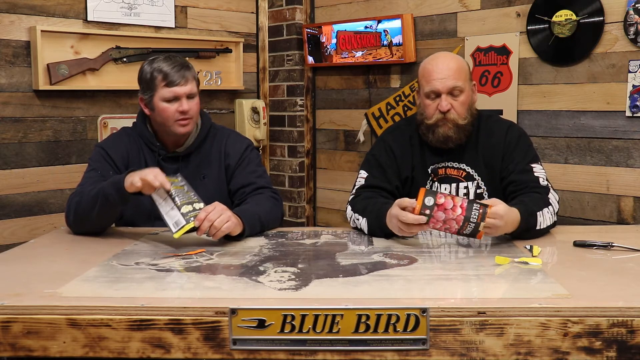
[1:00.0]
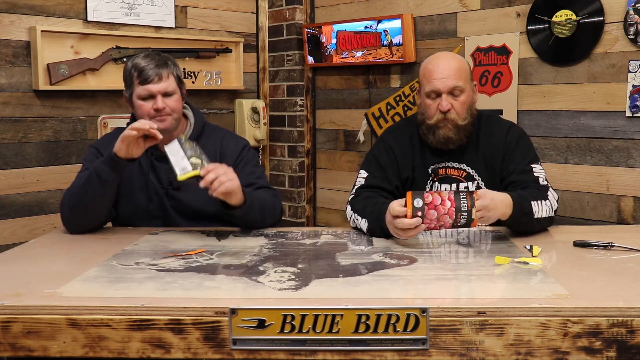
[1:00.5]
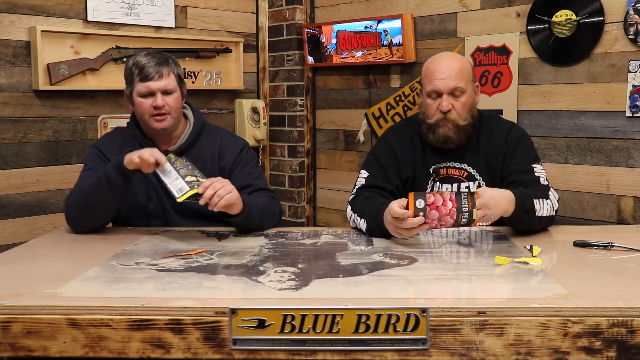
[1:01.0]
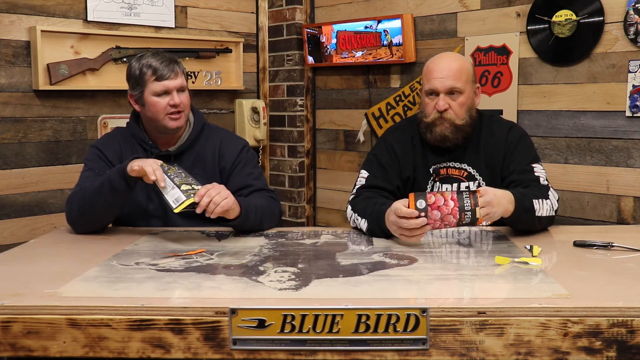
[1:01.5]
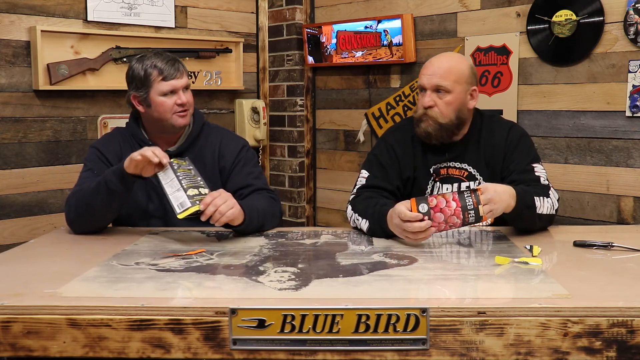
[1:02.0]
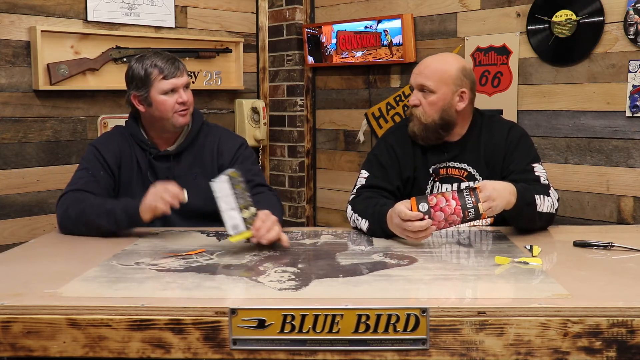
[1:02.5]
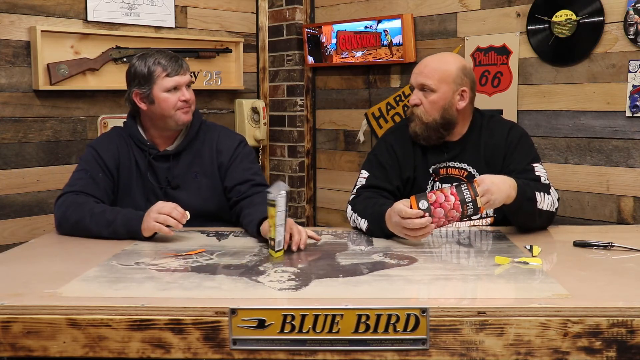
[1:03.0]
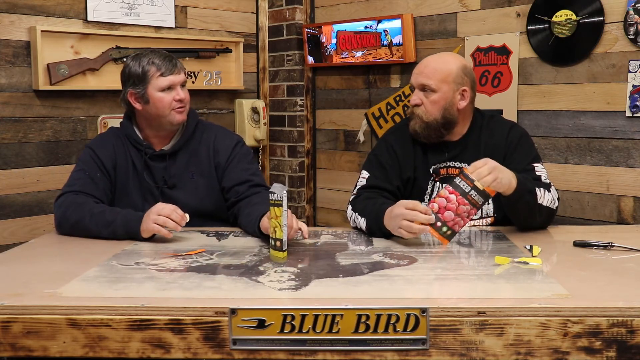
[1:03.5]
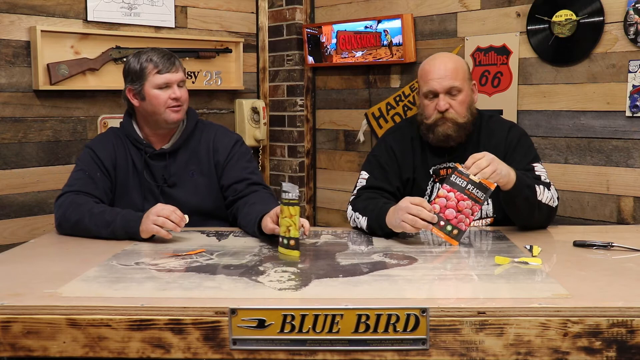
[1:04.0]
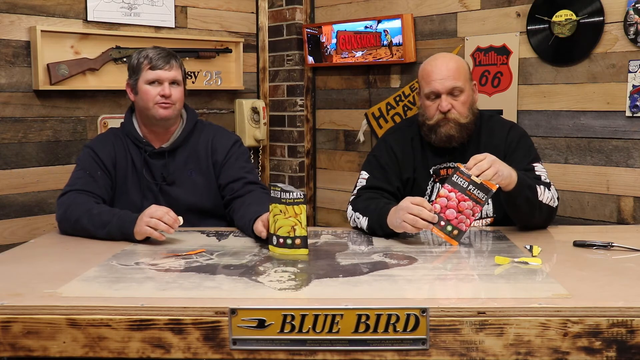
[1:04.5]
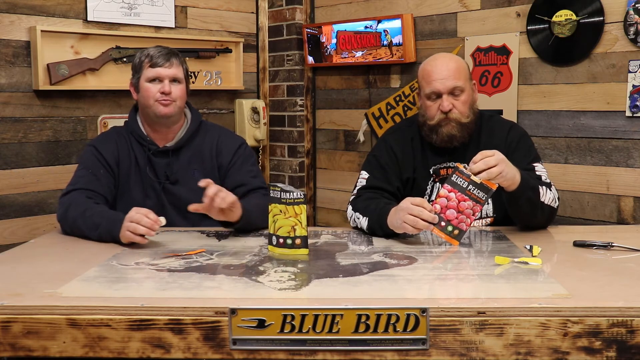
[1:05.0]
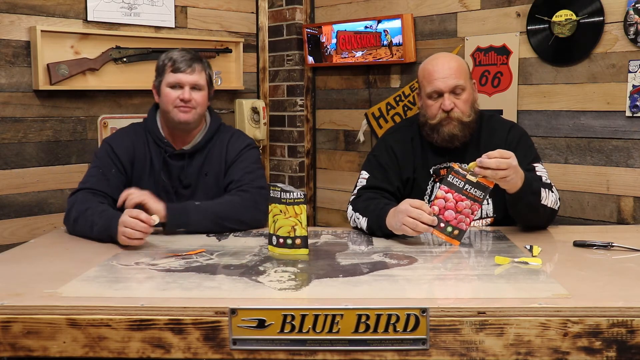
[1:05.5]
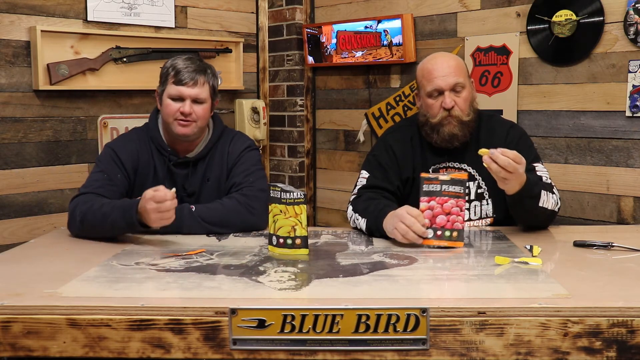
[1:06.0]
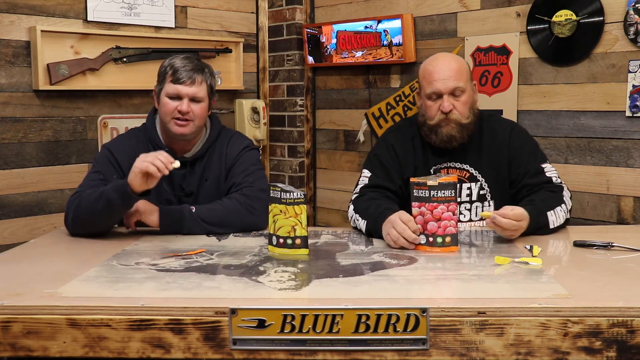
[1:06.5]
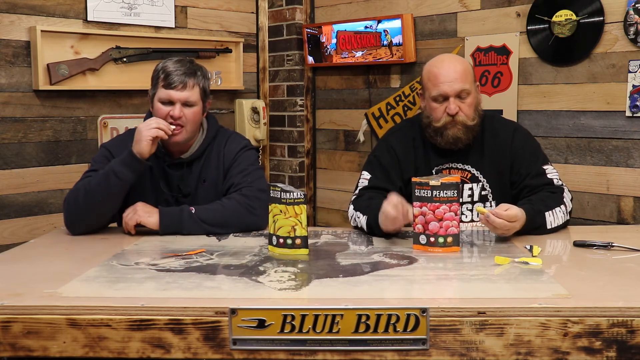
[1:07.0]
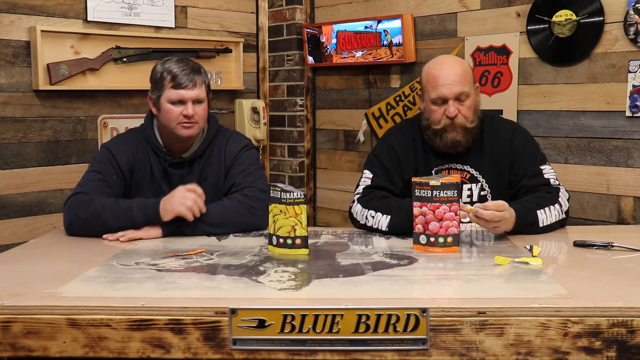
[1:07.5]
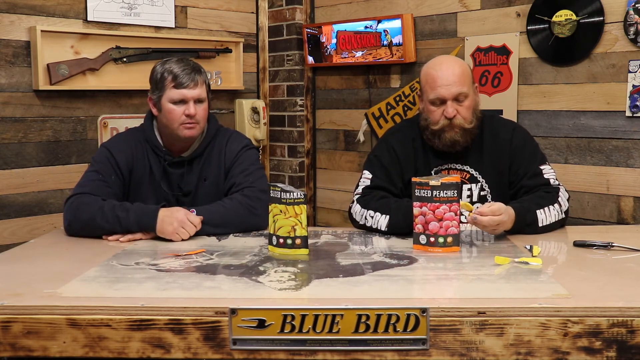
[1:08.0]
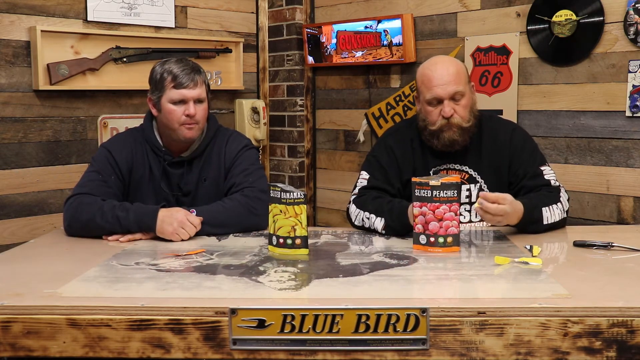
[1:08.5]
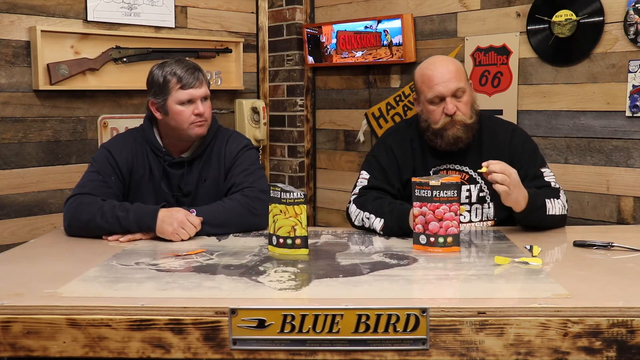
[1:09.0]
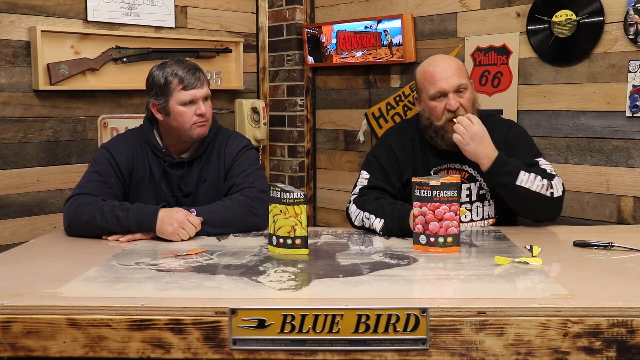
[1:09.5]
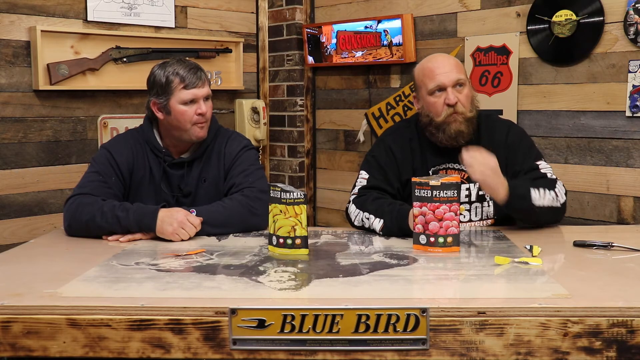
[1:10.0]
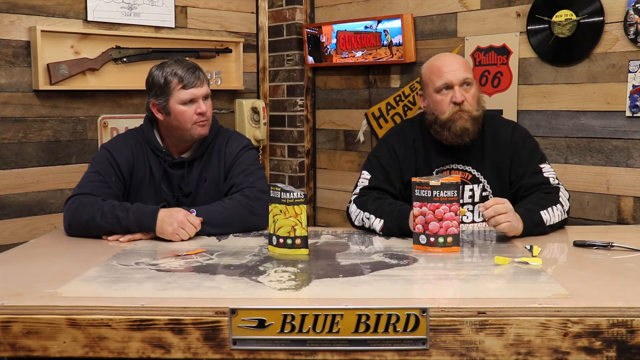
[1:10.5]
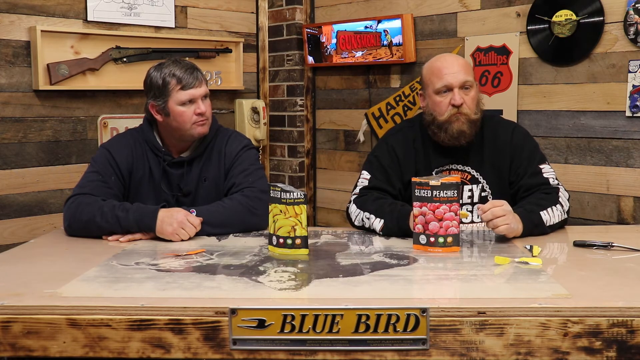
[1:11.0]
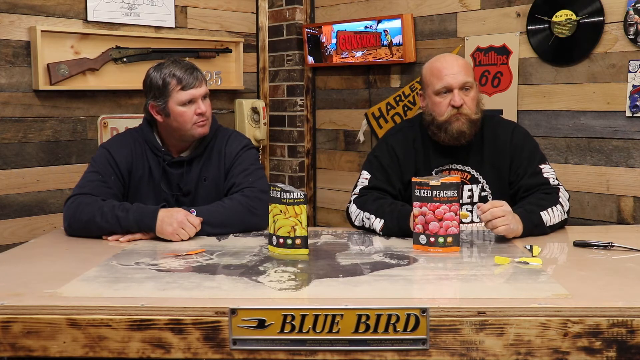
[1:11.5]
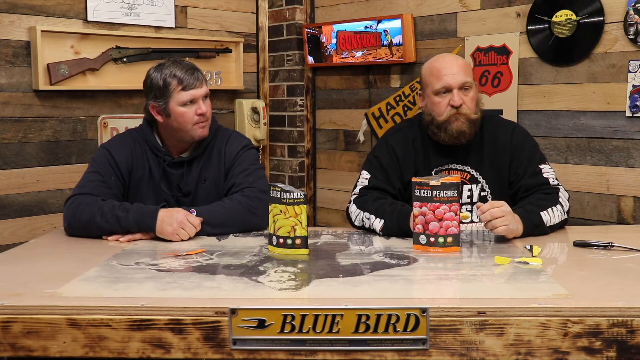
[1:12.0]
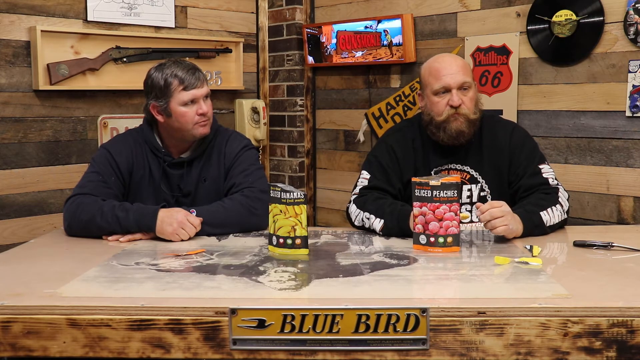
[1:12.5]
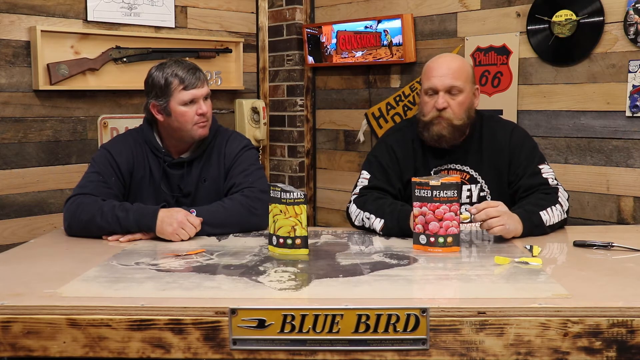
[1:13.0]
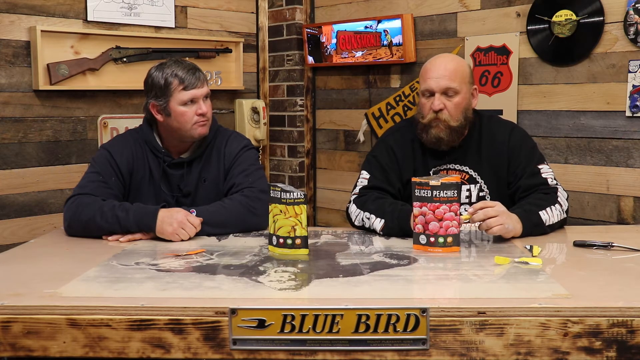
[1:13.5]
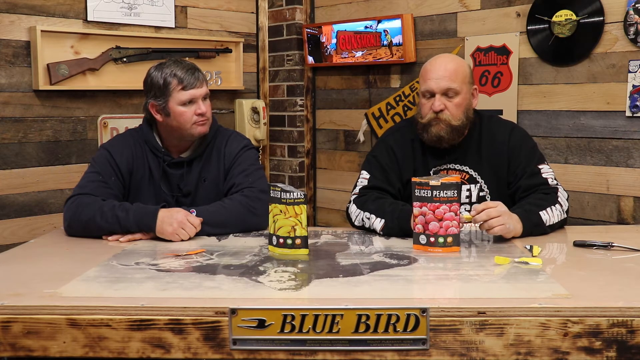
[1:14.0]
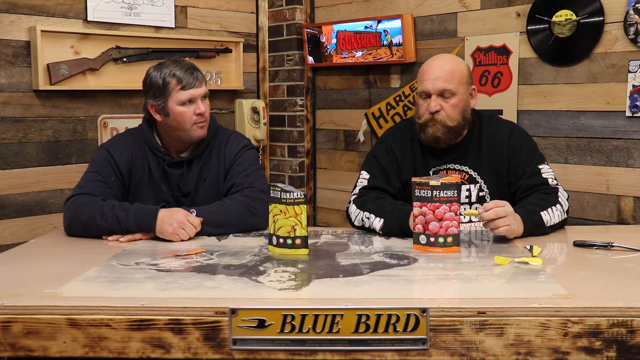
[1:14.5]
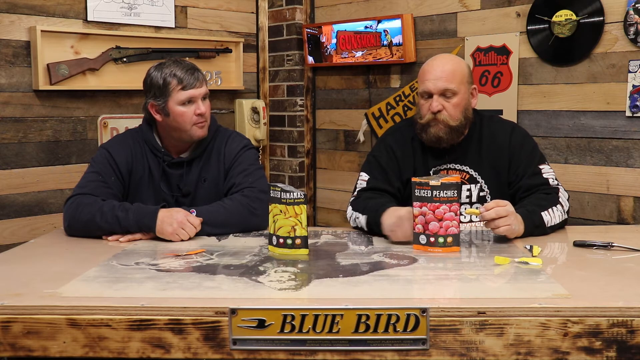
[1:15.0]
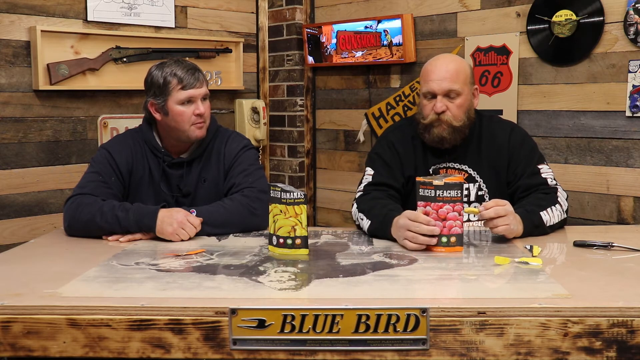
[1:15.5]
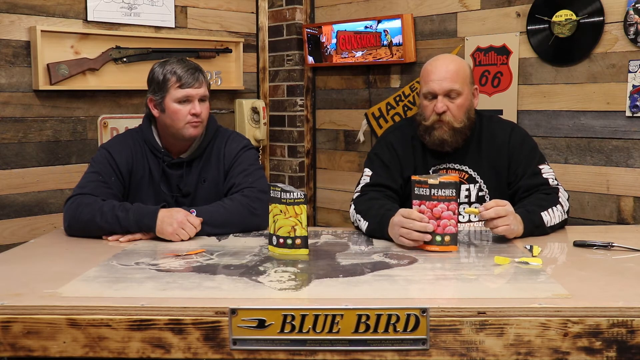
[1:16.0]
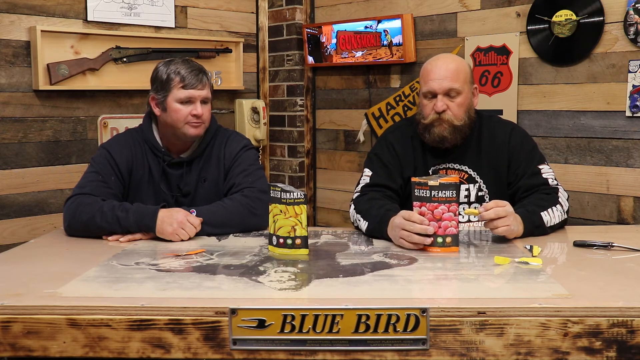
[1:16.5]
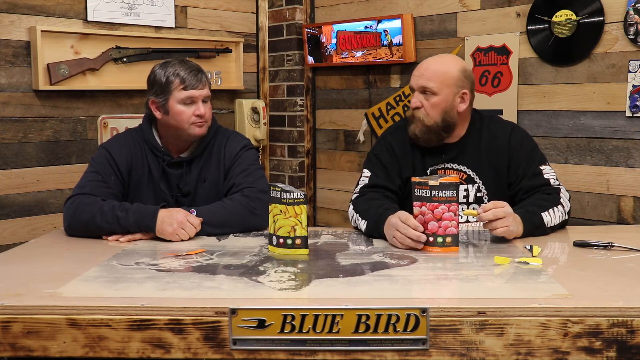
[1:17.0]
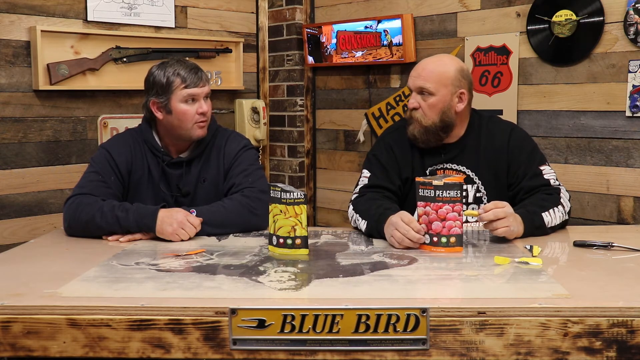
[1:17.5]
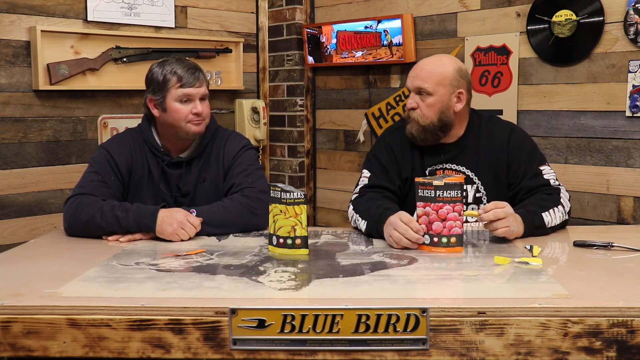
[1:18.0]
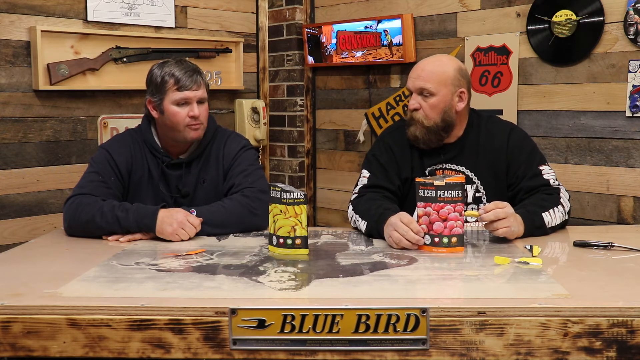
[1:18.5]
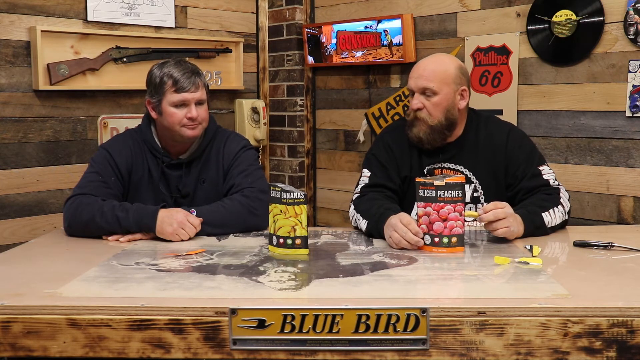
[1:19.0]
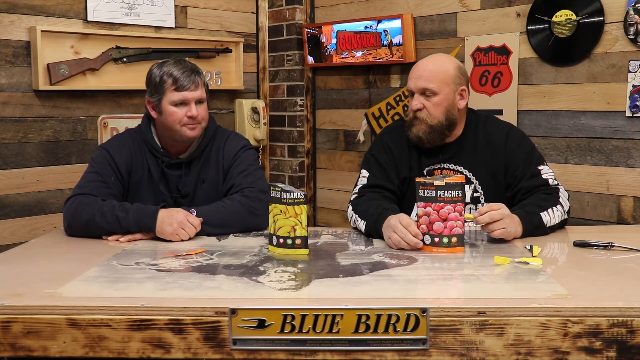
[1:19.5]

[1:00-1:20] The two men in black tops are still eating the snacks from the sachets, with the sticker on the front of the table saying "blue bird". One man's knife is still lying on the table, along with an art picture of an individual on top of the table. In the background there still seems to be a rifle hung on the wall, along with other stickers with numbers and weights written on them, and there also seems to be an old winding telephone behind them. The men still seem to be eating the snacks out of the sachets and talking to each other, then look back at the camera, still seeming to explain the taste of the snacks. One seems to eat and think, then talks to the other again, and they keep doing this.